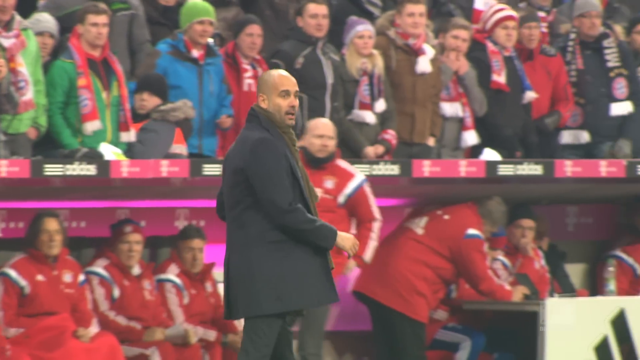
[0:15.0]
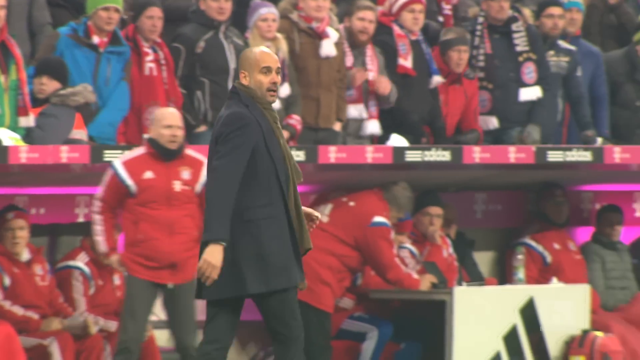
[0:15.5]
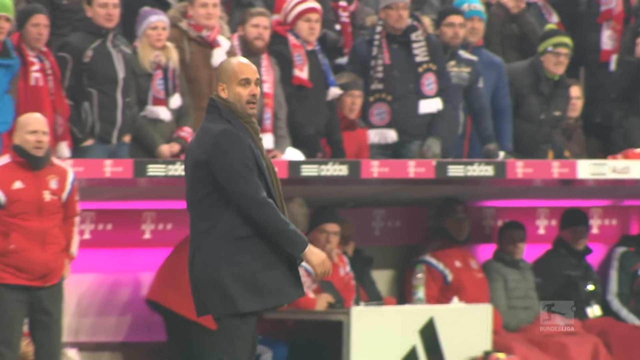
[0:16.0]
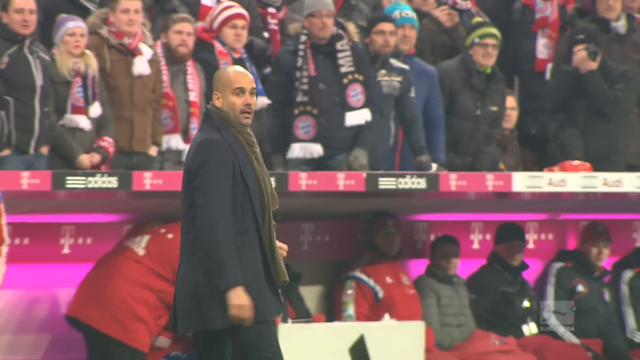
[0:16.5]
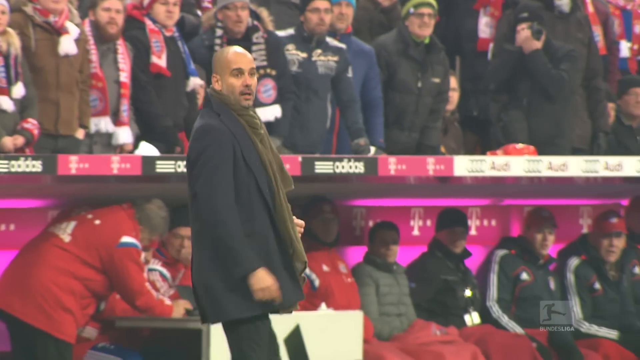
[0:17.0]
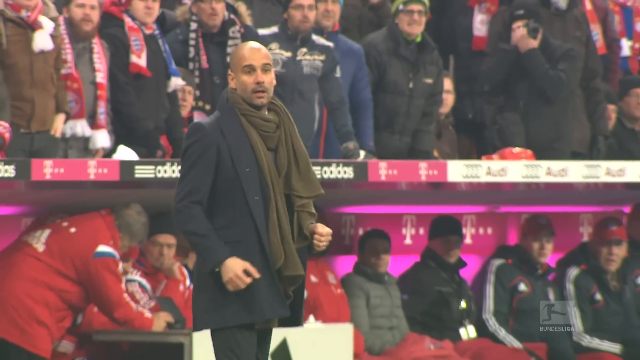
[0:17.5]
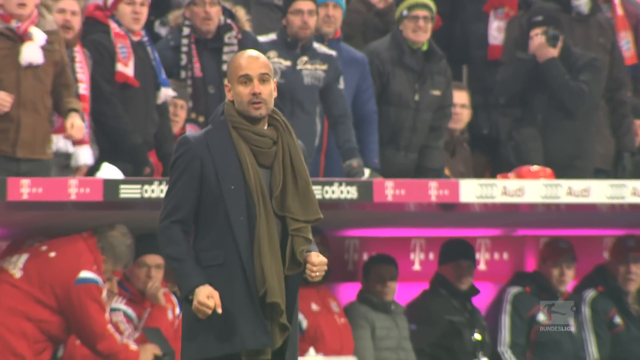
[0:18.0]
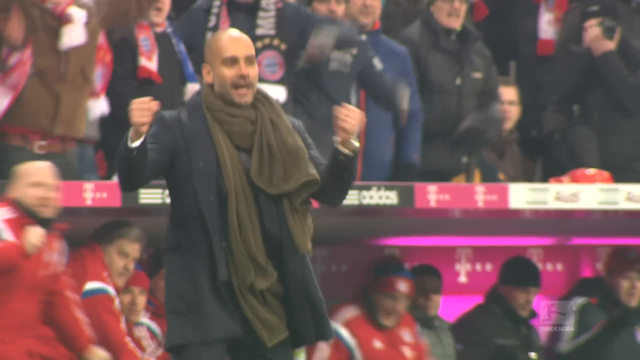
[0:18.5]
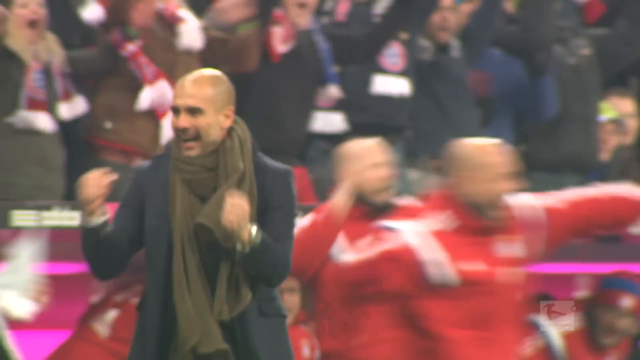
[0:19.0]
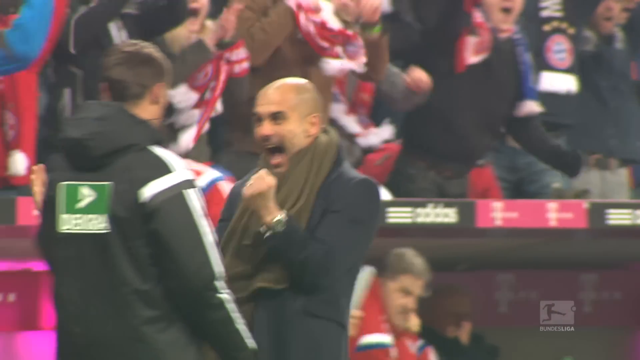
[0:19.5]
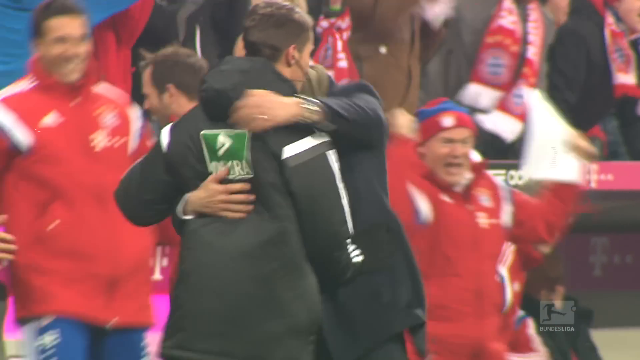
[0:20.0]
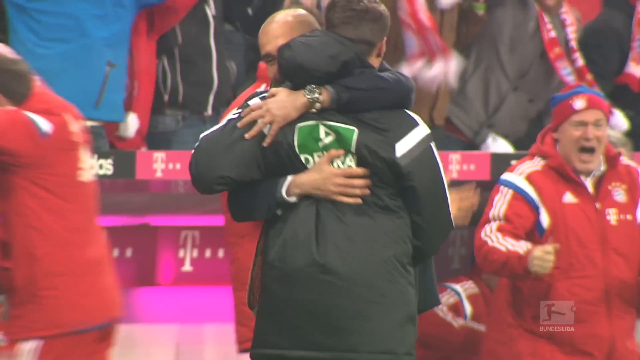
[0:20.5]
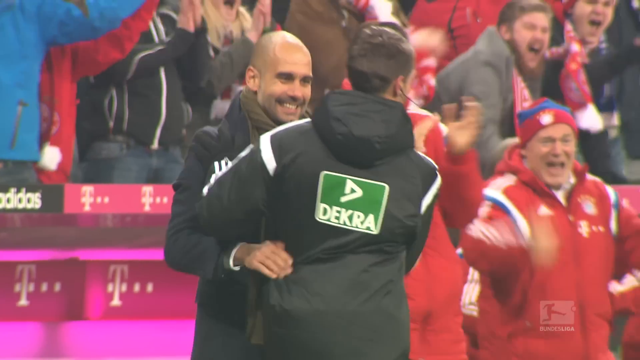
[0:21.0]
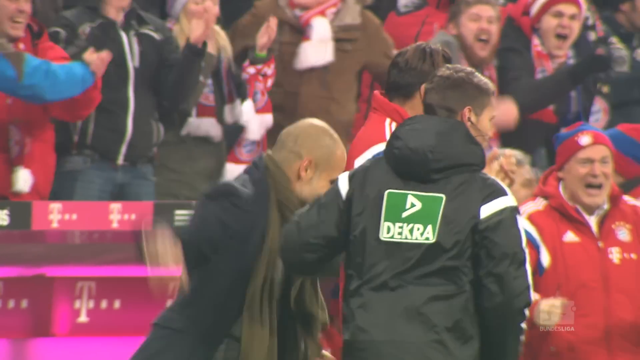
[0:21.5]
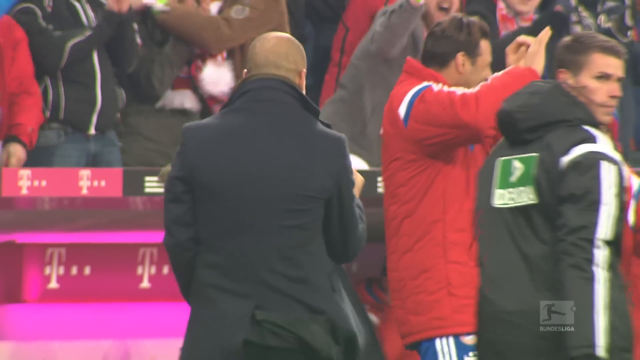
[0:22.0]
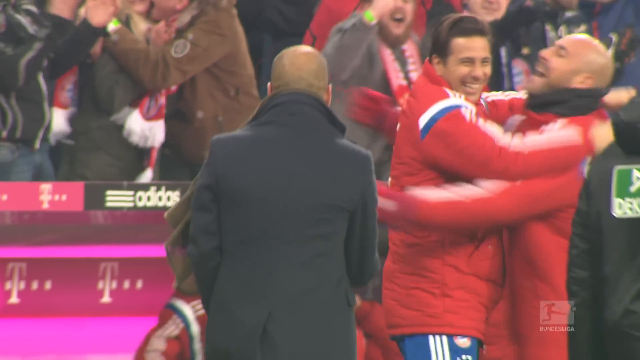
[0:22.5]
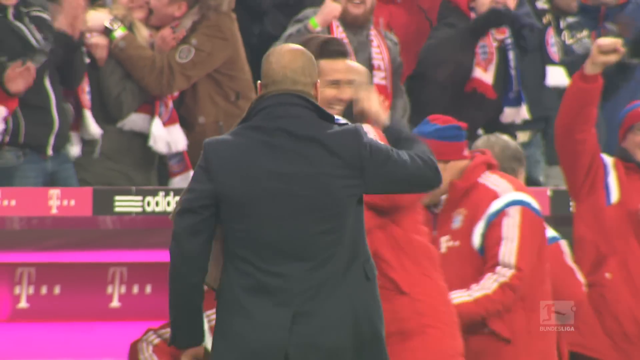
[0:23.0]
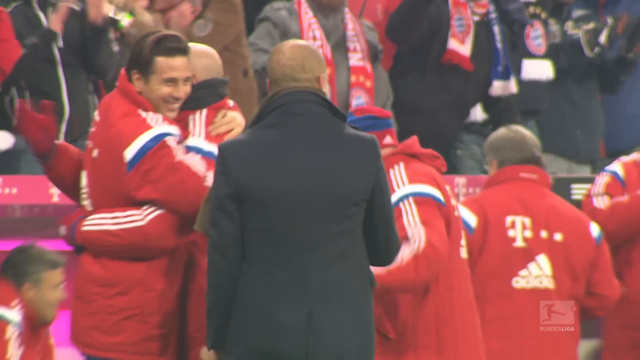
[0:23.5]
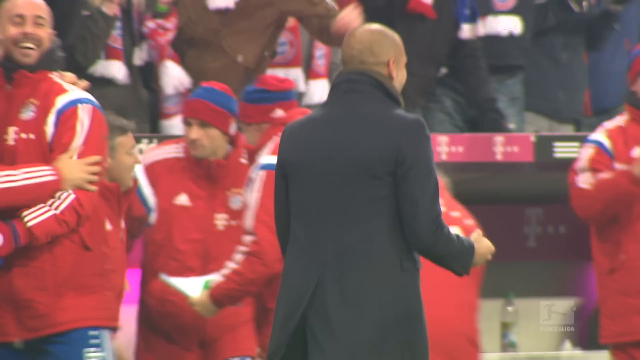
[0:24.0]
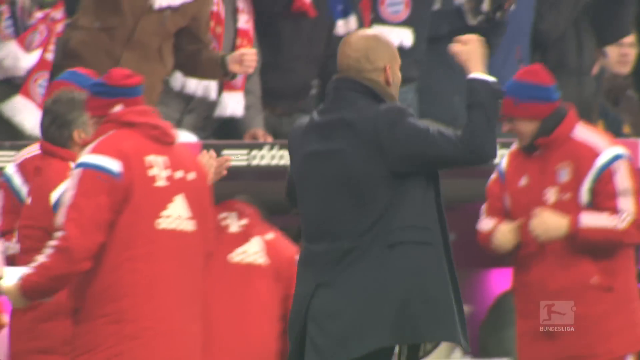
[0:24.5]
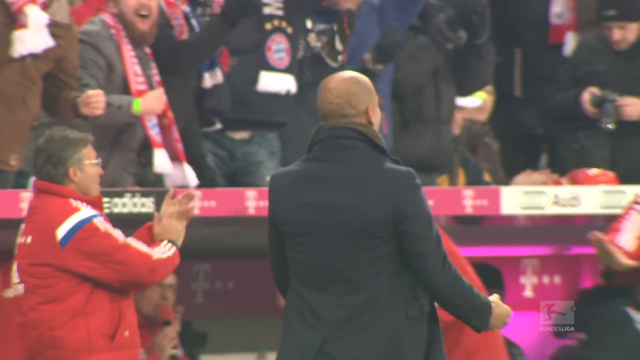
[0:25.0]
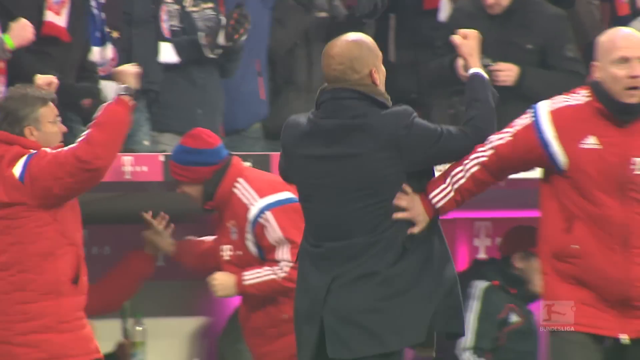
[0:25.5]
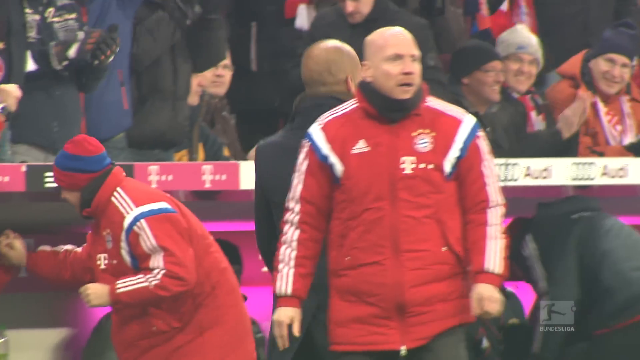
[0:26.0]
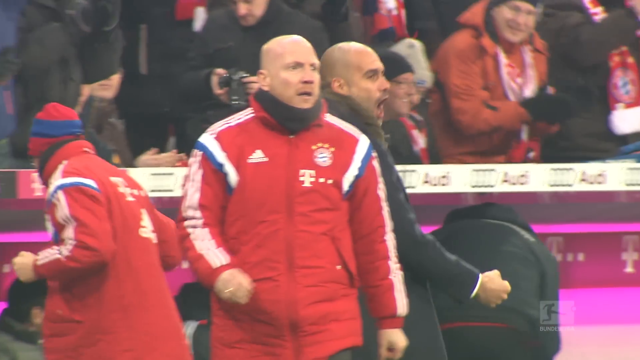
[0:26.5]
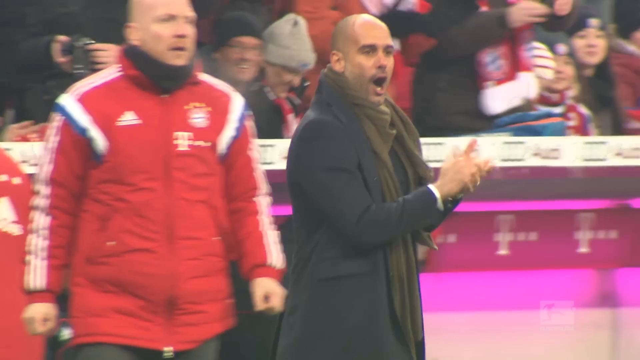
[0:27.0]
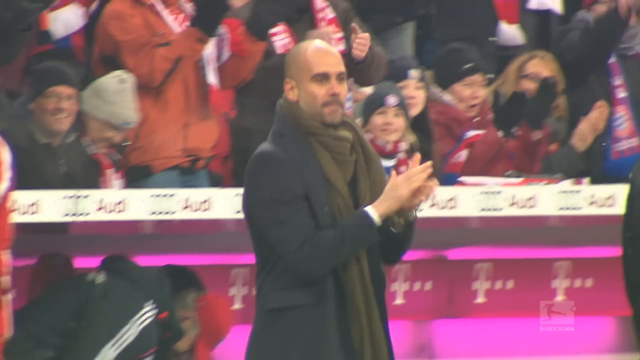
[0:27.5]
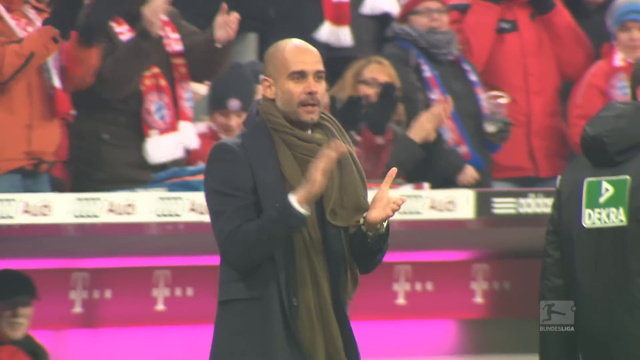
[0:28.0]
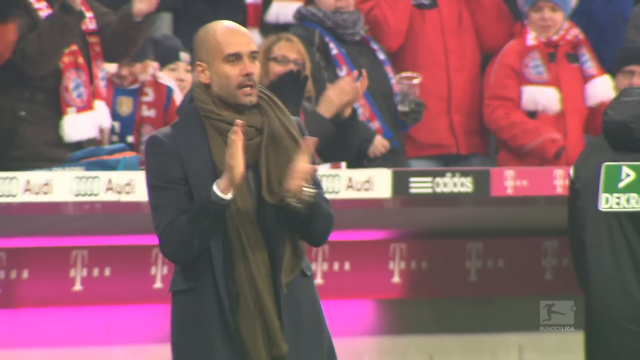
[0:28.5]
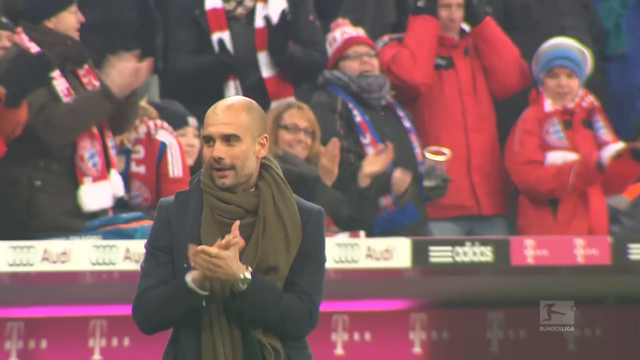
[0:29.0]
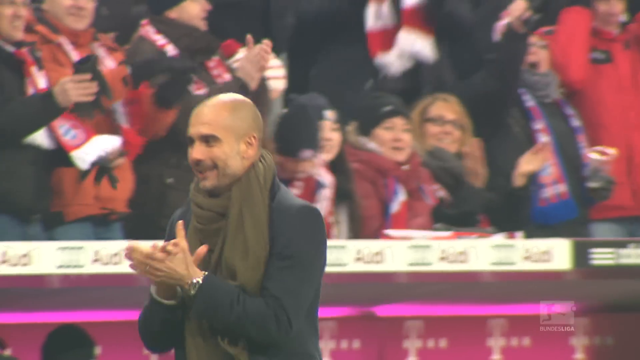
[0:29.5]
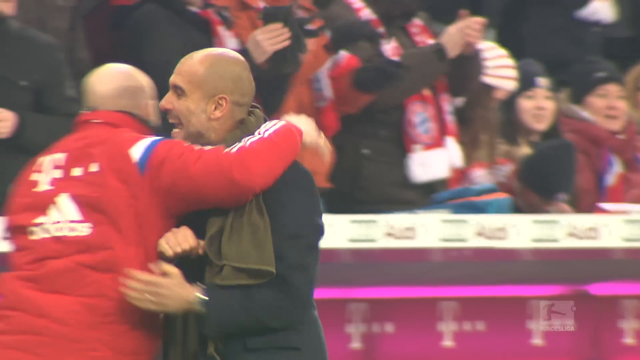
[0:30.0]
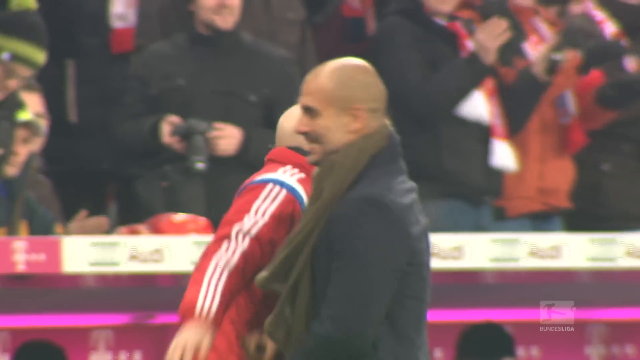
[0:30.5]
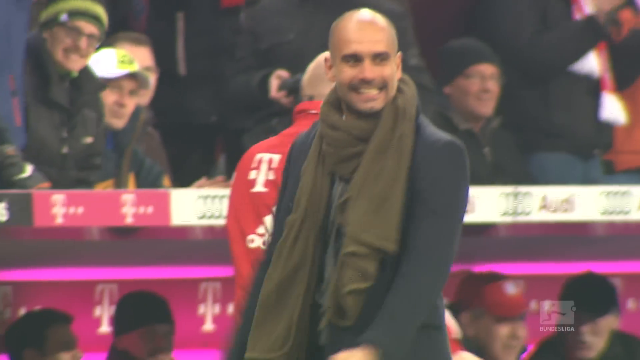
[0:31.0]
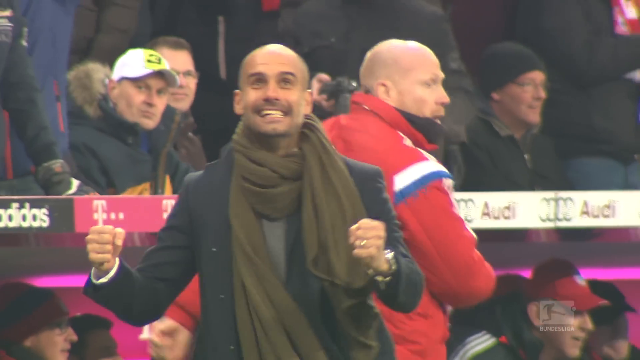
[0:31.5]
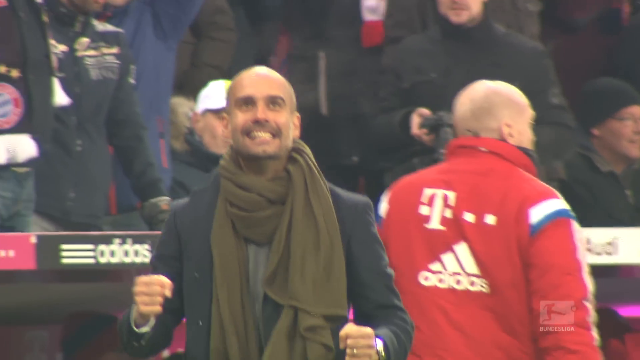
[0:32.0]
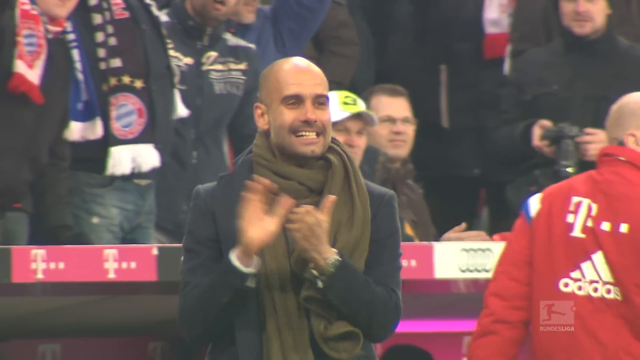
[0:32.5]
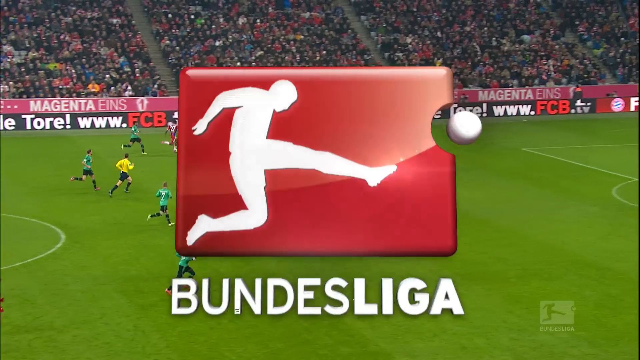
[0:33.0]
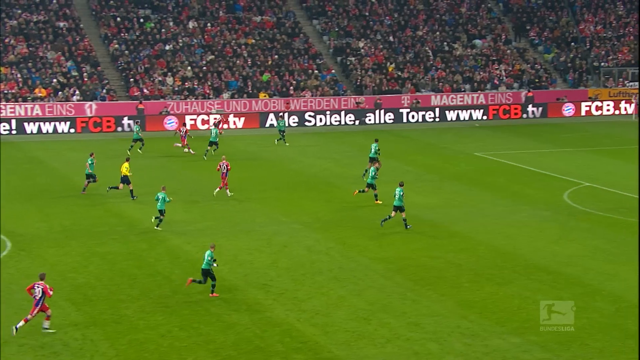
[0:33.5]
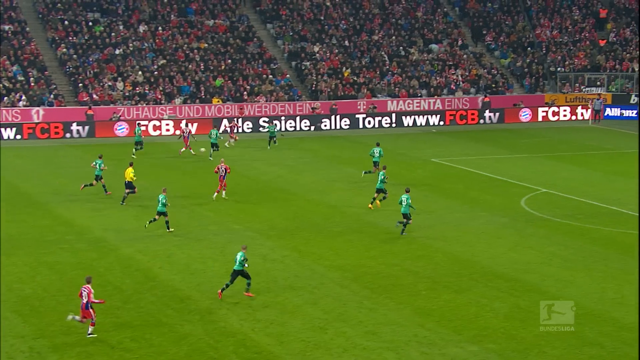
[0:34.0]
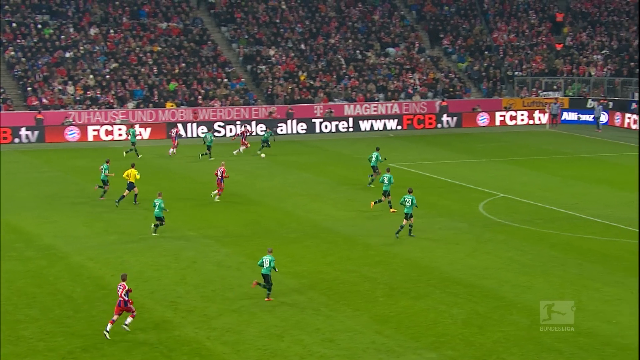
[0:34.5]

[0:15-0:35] The bald man keeps walking in front of a crowd of fans in the grandstand behind him, facing toward the center of what must be a playing field. He stops, raises both arms and shakes them, then begins to smile, his mouth opening. He turns to the man with the green Dekra patch on the back of his jacket, celebrating, and puts his arms around him. Behind them, two men in red jackets with blue and white stripes around the top of the sleeves embrace, celebrate and jump around. Many people in the background are jumping around, and people up in the stands are smiling, jumping, celebrating and clapping. The bald man claps, still celebrating, and raises his fists. The Bundesliga logo then appears, superimposed over what appears to be a soccer field full of people playing soccer.